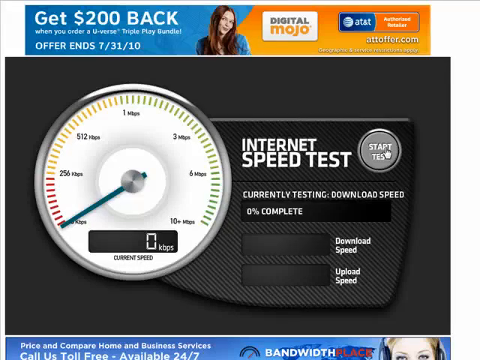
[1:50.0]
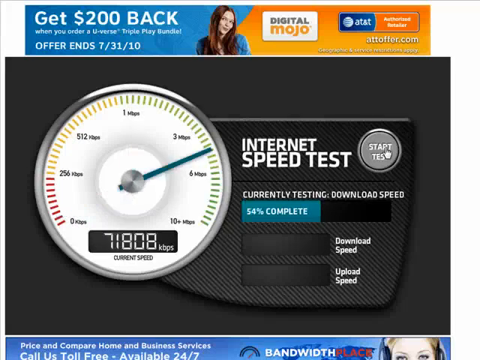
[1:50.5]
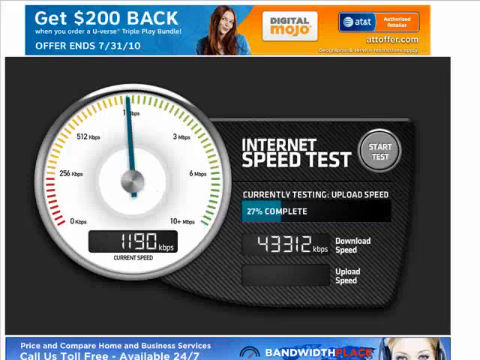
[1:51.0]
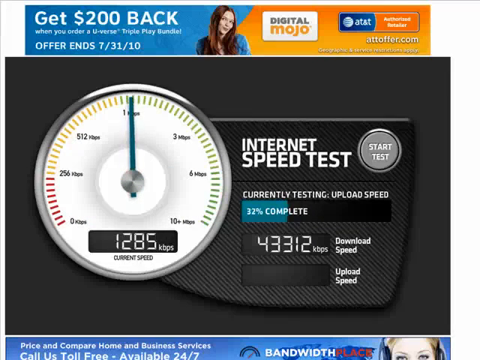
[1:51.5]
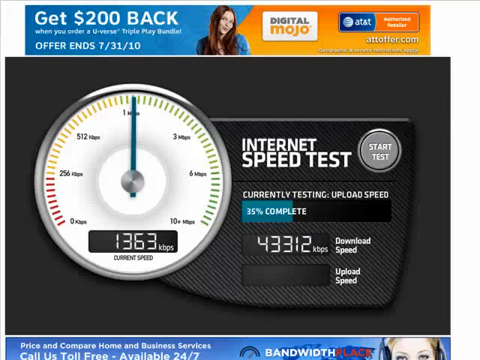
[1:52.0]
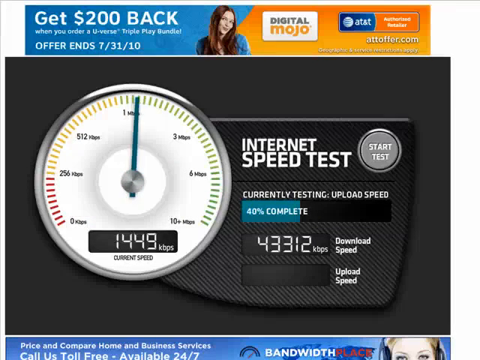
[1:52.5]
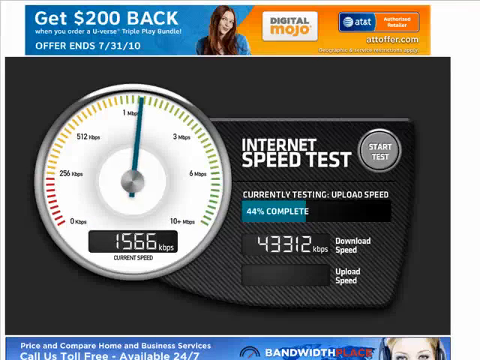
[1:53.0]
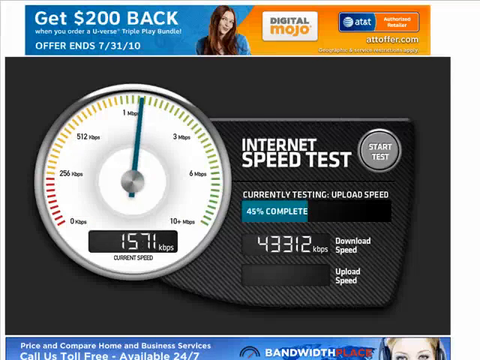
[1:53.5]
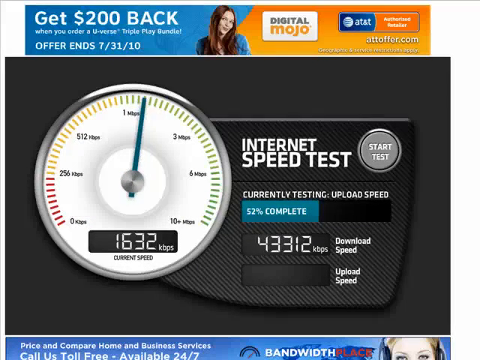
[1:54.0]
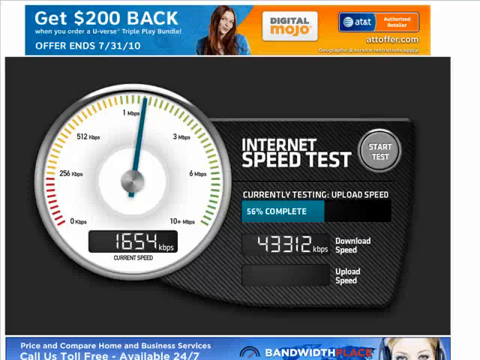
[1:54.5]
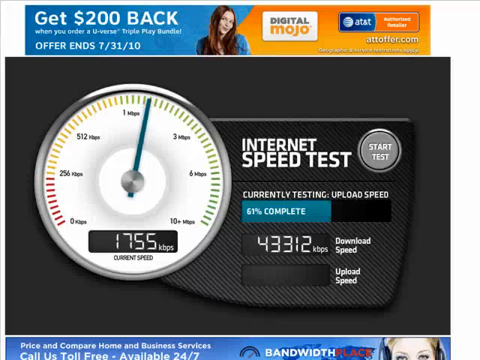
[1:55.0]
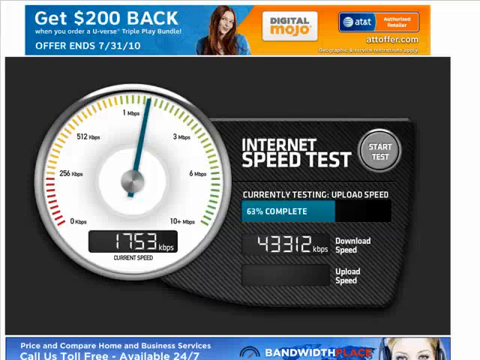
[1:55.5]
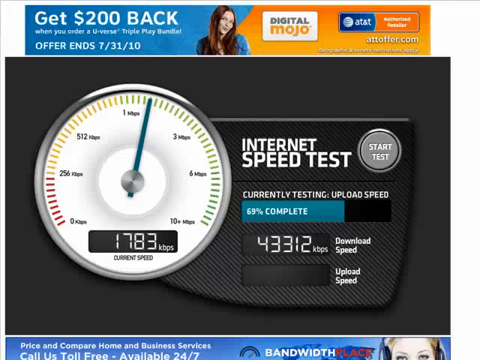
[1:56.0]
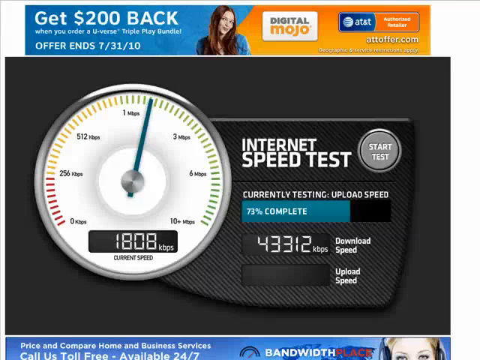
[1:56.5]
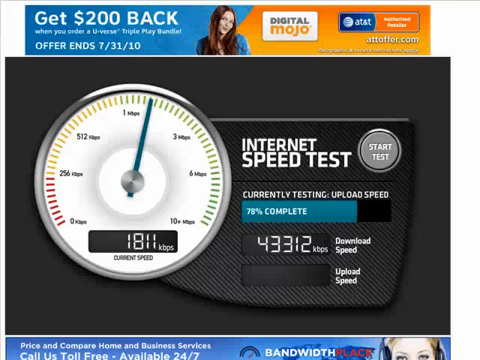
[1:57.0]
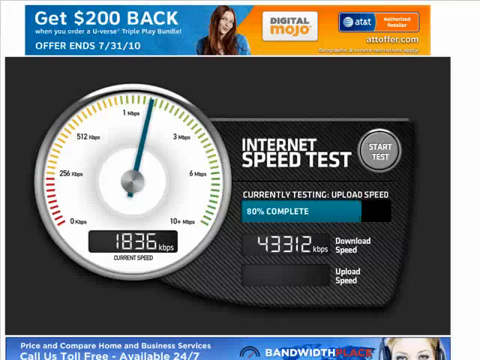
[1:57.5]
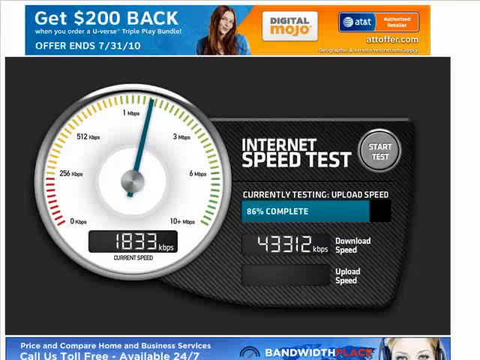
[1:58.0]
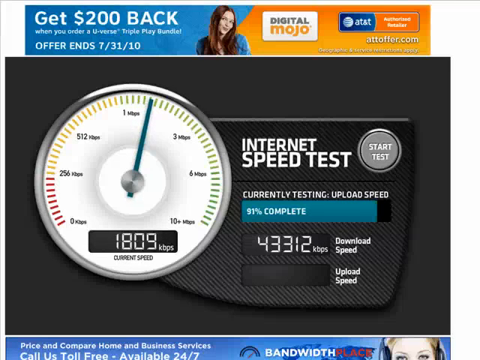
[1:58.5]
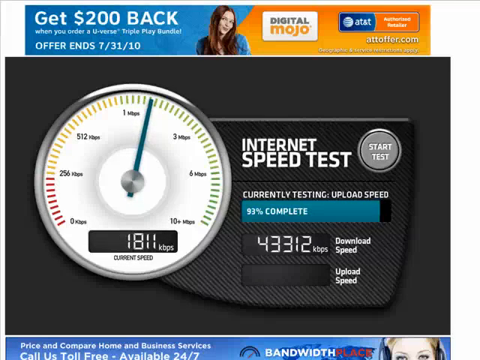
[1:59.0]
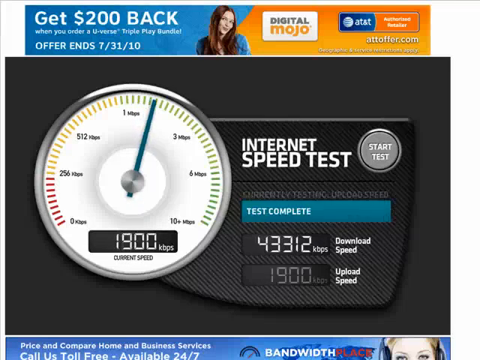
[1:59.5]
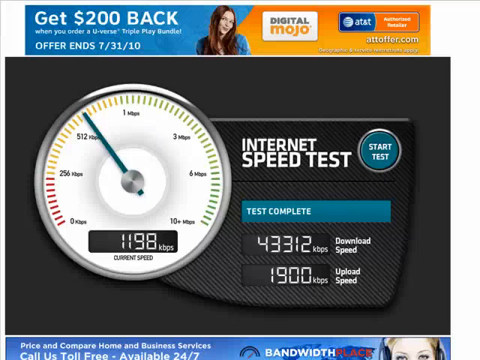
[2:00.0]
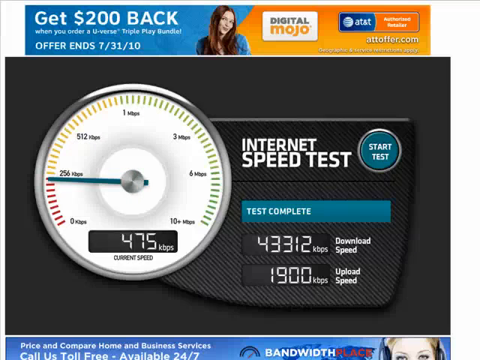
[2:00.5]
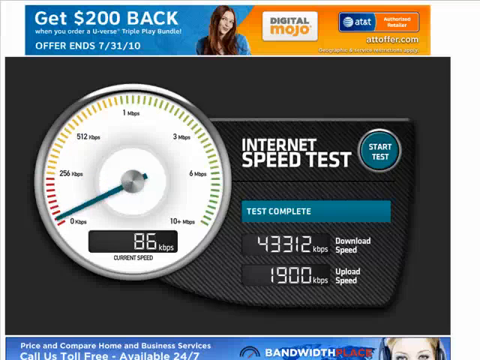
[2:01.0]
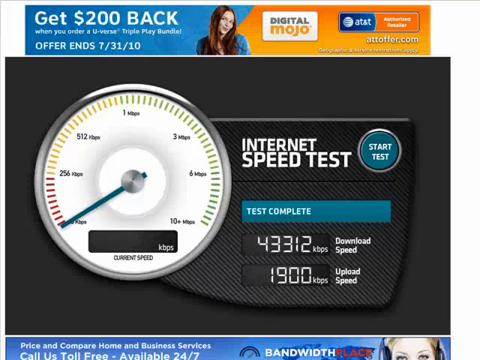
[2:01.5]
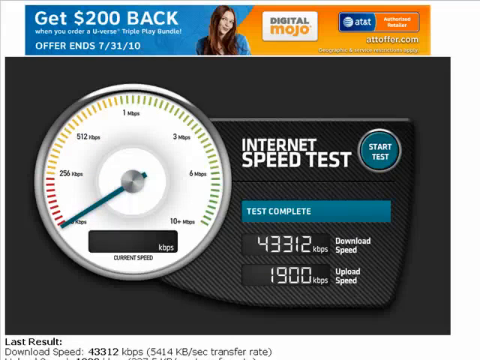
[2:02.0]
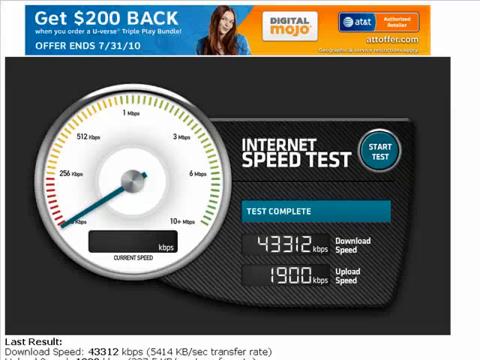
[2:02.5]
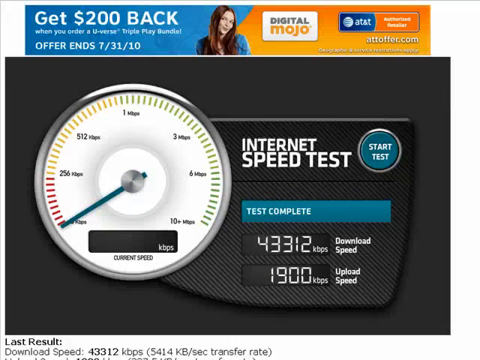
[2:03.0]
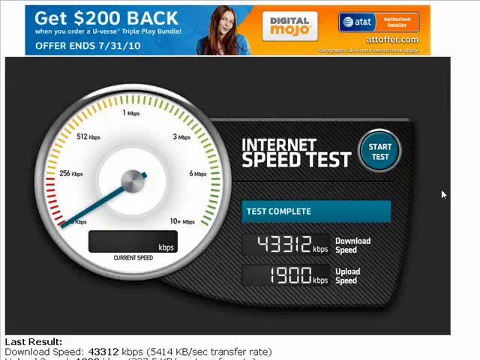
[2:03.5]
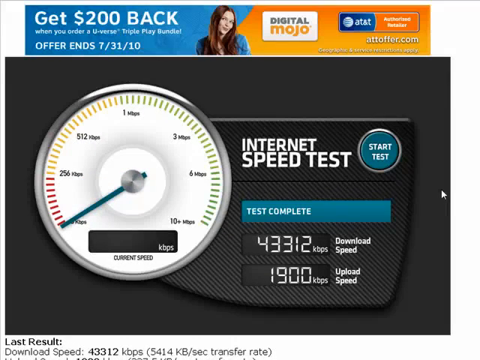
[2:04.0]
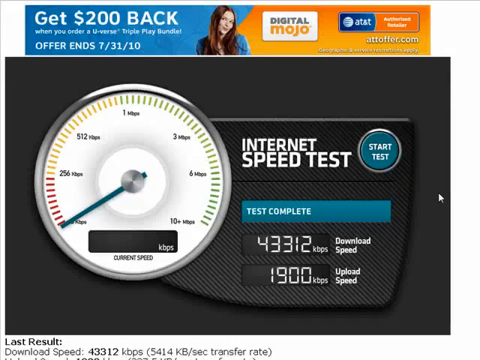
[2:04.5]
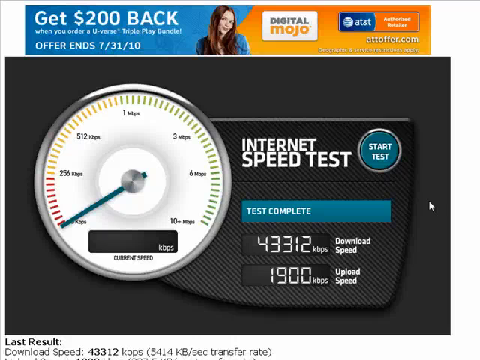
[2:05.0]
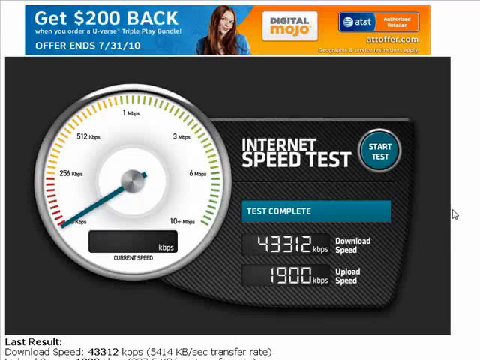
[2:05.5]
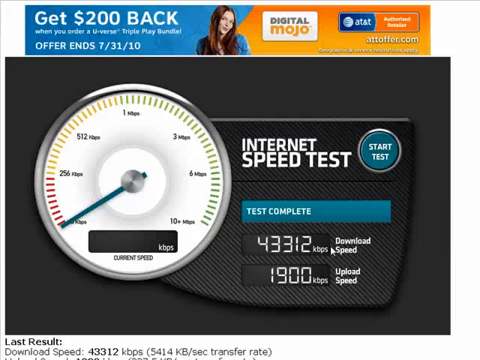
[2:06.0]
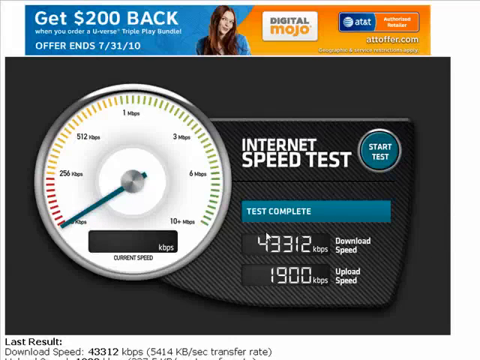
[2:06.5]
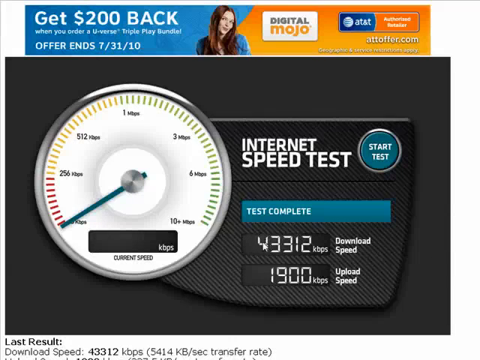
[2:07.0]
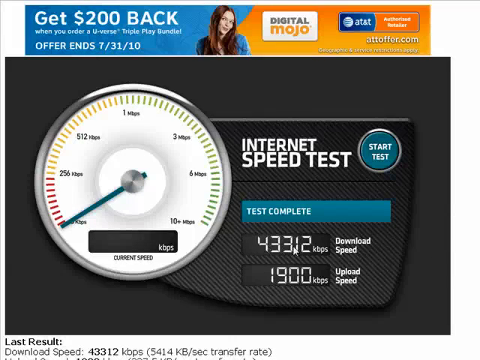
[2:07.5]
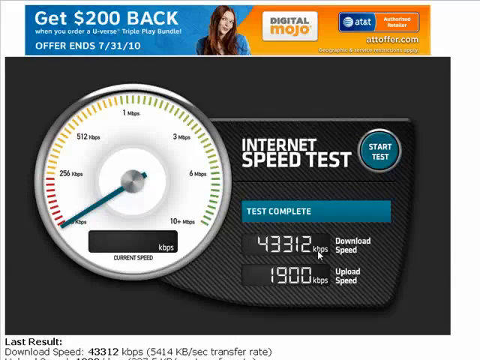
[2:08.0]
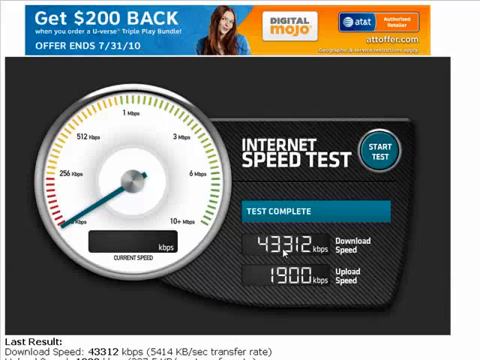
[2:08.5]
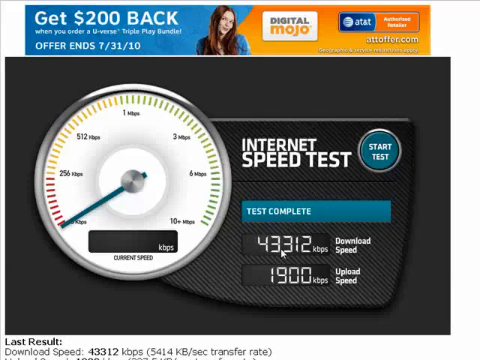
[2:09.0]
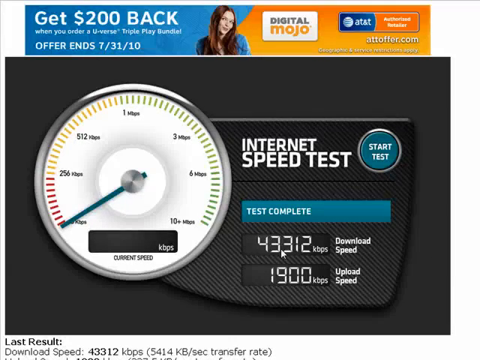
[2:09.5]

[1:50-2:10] After the button turns gray, "0 kbps" pops up in the screen area of the odometer on the left, with "current speed" underneath. In the center of the odometer is a silver circle with a green arrow pointing down. Under the button it says "currently testing download speed," with a screen reading "0% complete" and two more screens below on the right: the top says "download speed" and the bottom "upload speed." The cursor hovers right above the start test button and clicks. The odometer arrow zooms all the way over to the right and then back up to the middle. Below it, the reading changes to "1255 KBS," and the first screen on the right, a teal bluish color, says "30% complete." The numbers slowly rise while the arrow barely moves to the right. Under "currently testing upload speed," the first screen on the right climbs to about 52%, both slowly creeping up, and the arrow moves about three dashes from the top. When it reaches 100%, the top screen says "test complete," the start test button turns back to teal, the hand on the odometer falls back down to zero, and the counter on the odometer screen goes to zero. The download area now reads "43,312," and below it the upload speed reads "1900." The cursor moves to the download speed and moves back and forth pointing at it.